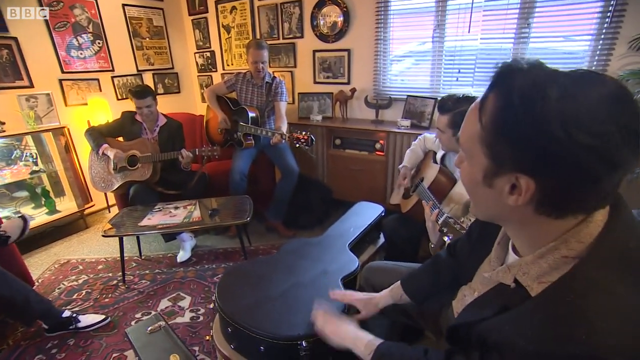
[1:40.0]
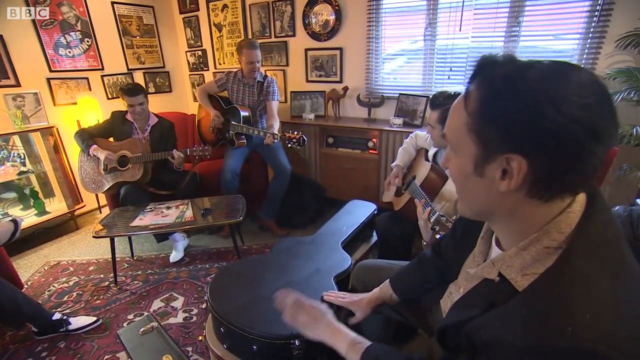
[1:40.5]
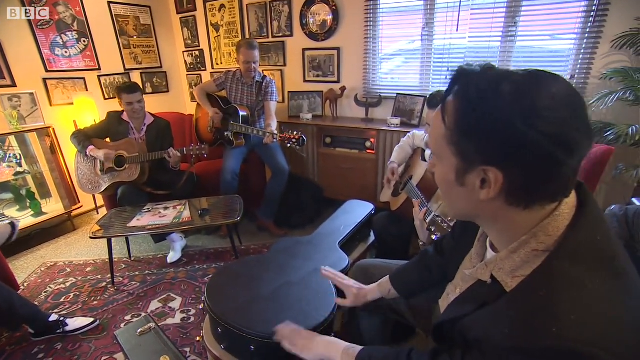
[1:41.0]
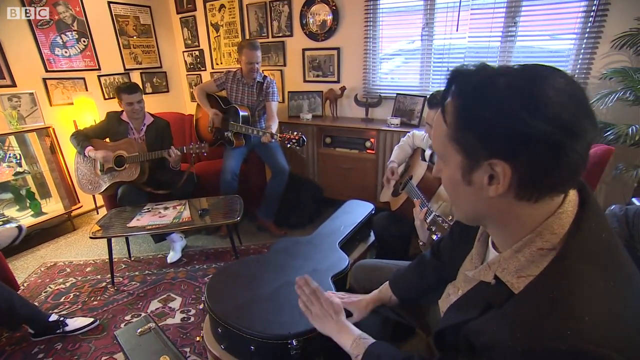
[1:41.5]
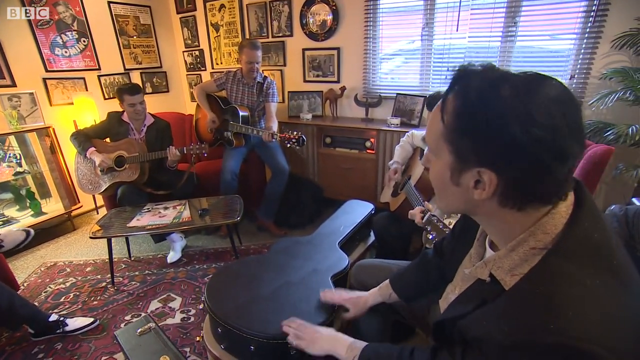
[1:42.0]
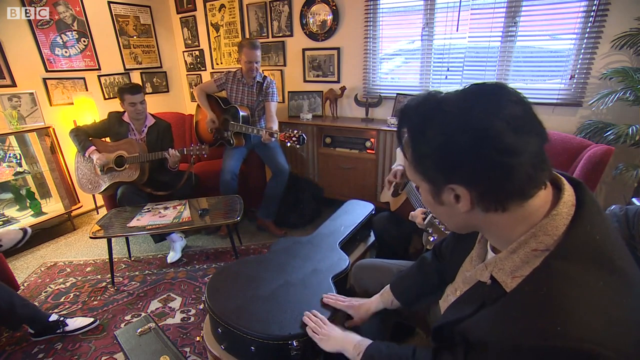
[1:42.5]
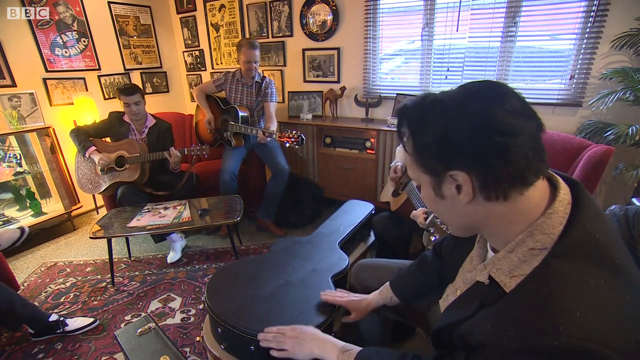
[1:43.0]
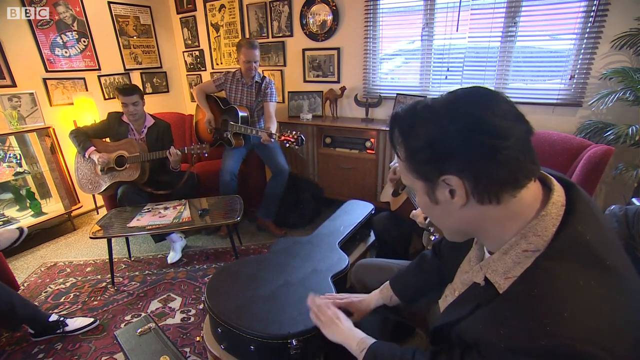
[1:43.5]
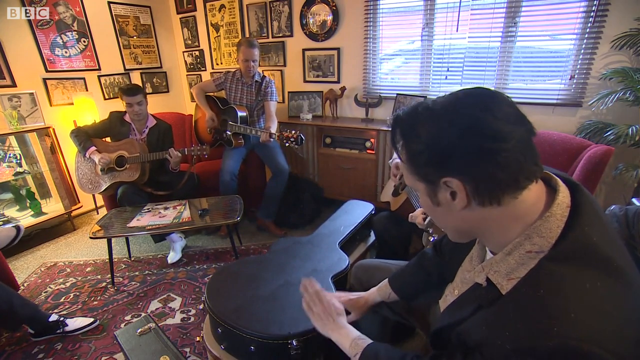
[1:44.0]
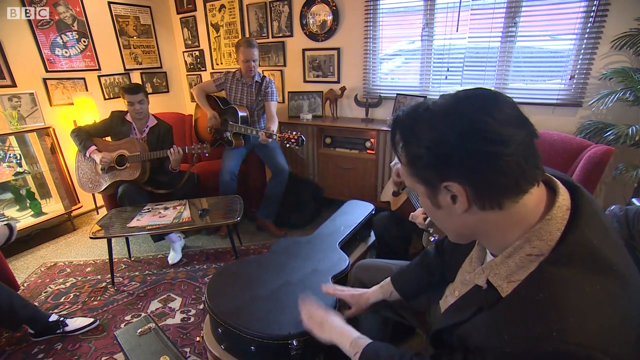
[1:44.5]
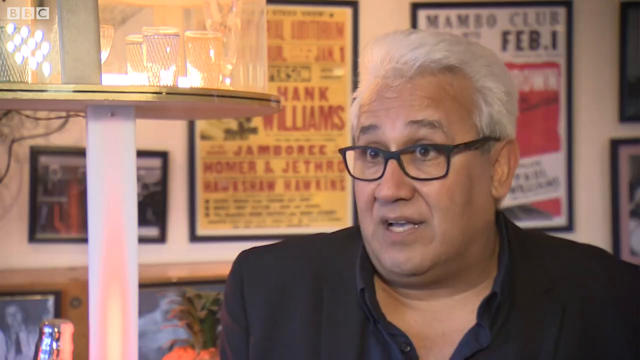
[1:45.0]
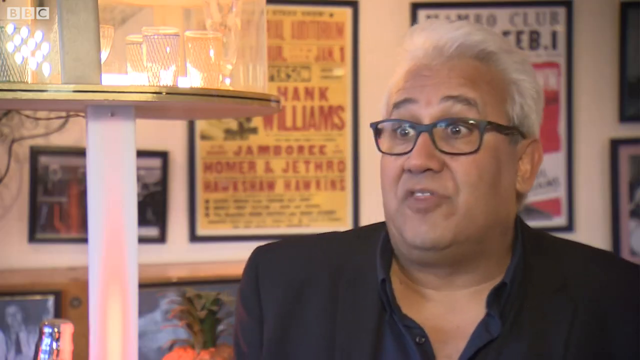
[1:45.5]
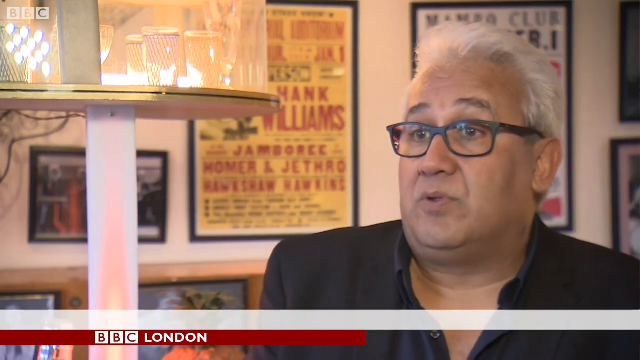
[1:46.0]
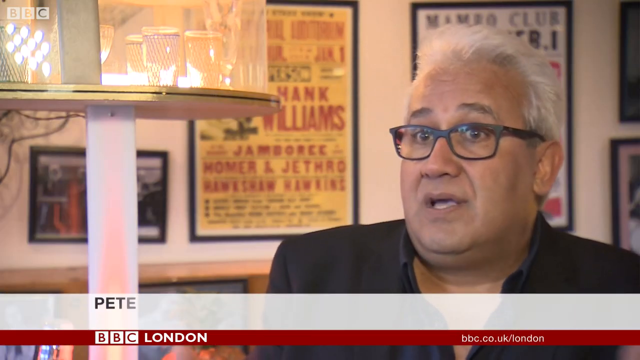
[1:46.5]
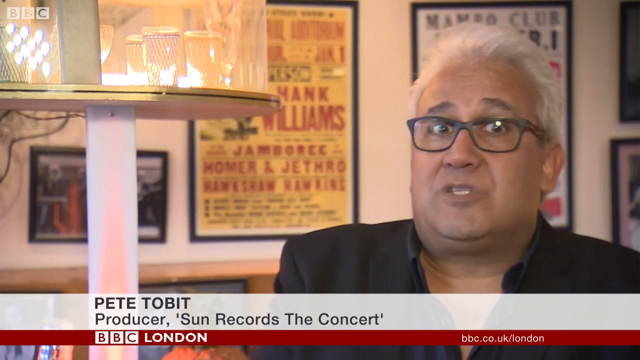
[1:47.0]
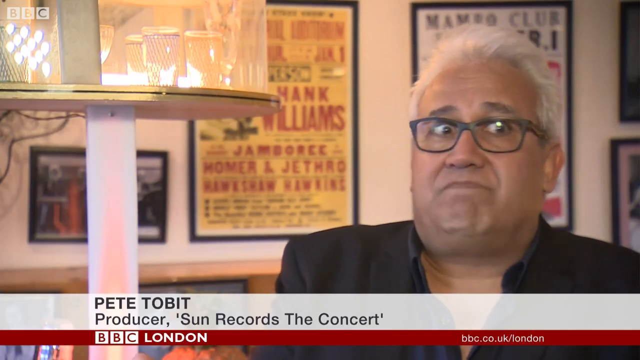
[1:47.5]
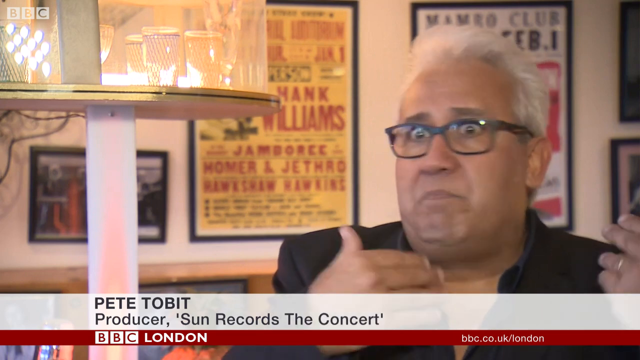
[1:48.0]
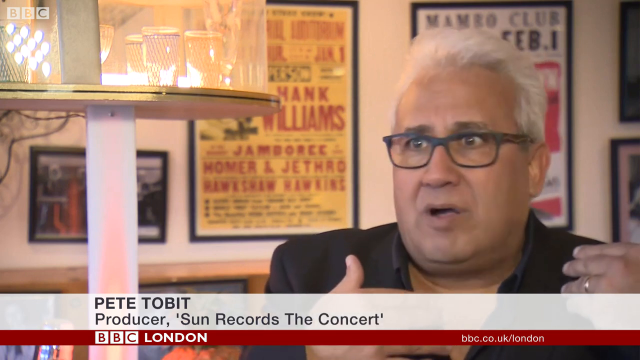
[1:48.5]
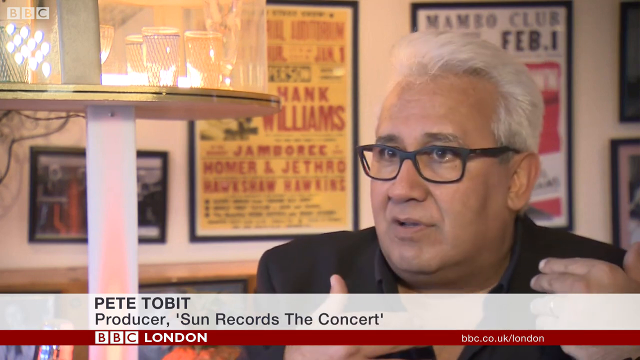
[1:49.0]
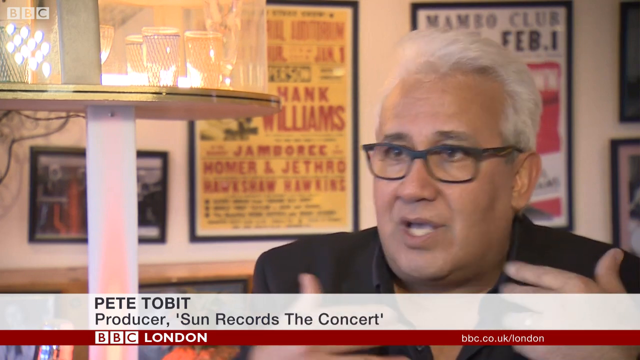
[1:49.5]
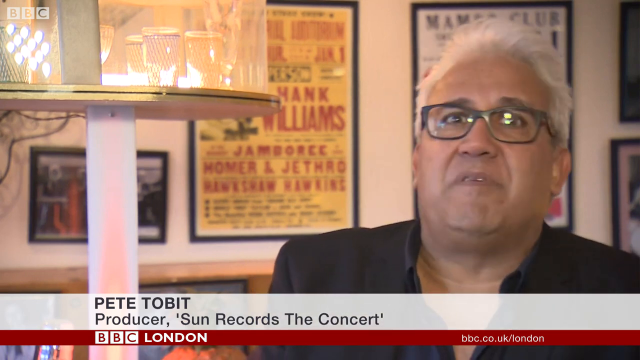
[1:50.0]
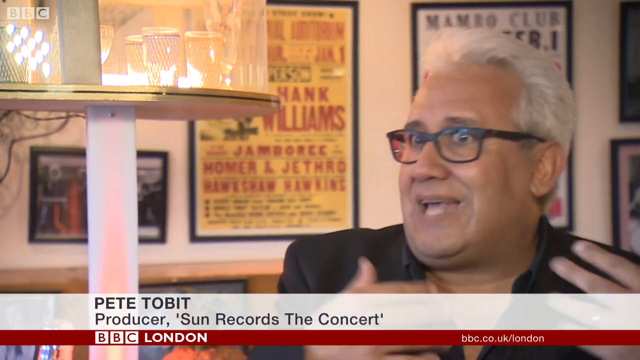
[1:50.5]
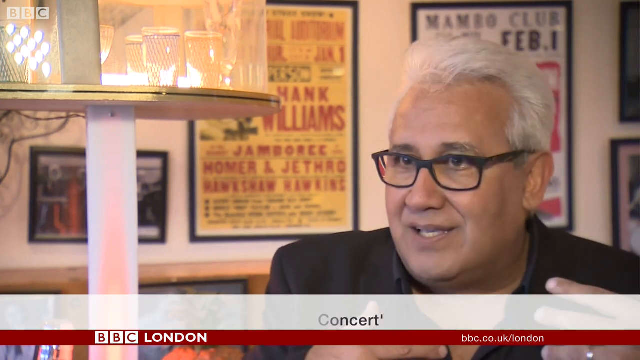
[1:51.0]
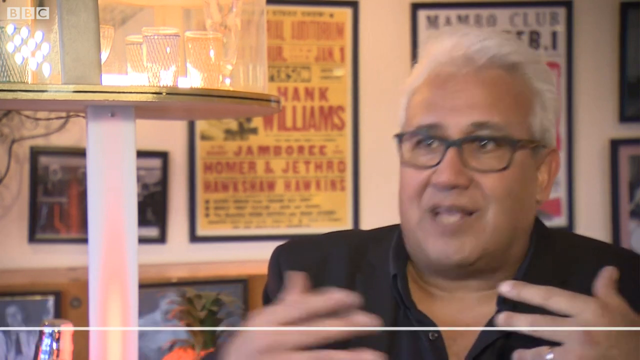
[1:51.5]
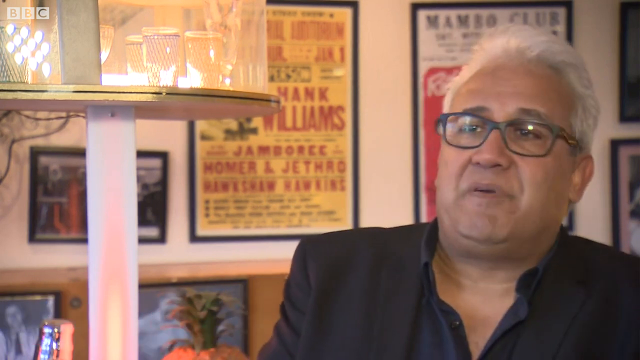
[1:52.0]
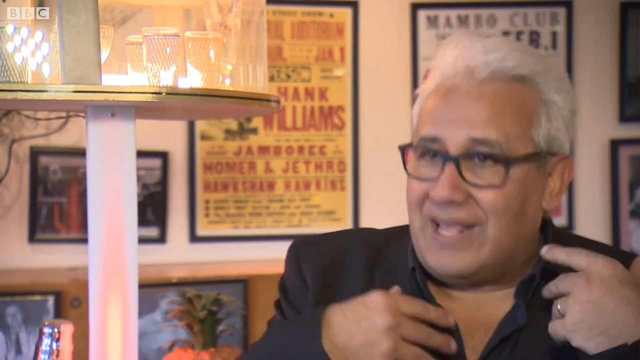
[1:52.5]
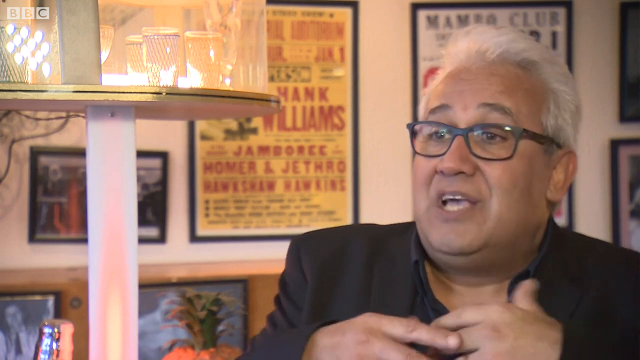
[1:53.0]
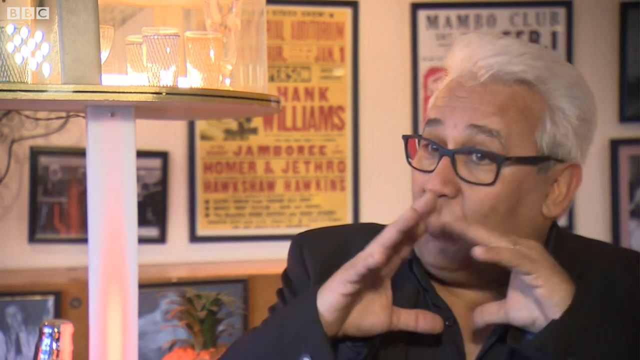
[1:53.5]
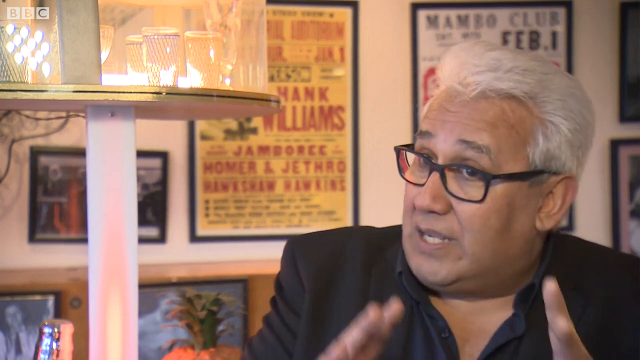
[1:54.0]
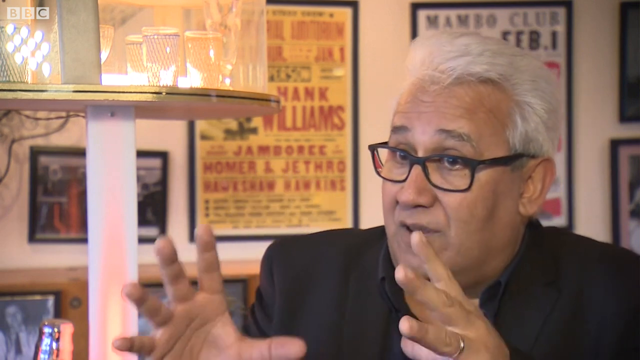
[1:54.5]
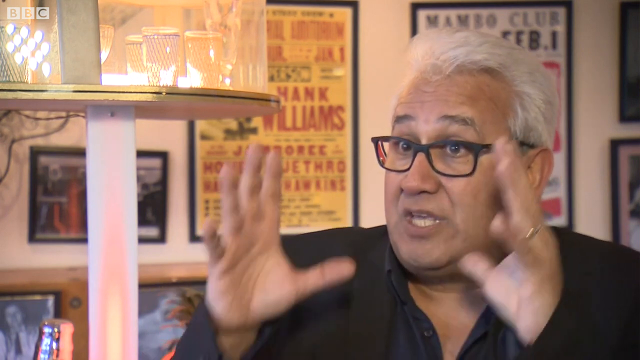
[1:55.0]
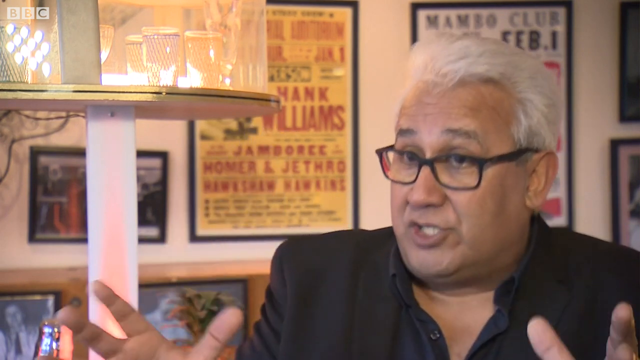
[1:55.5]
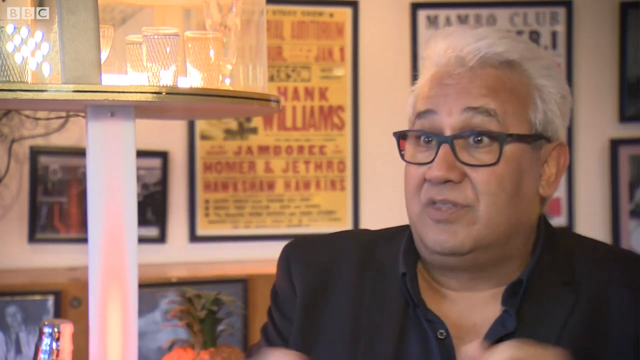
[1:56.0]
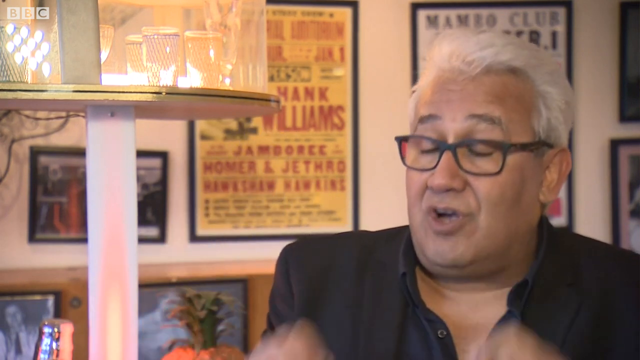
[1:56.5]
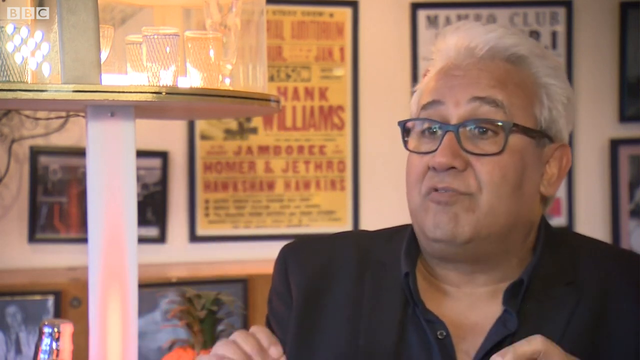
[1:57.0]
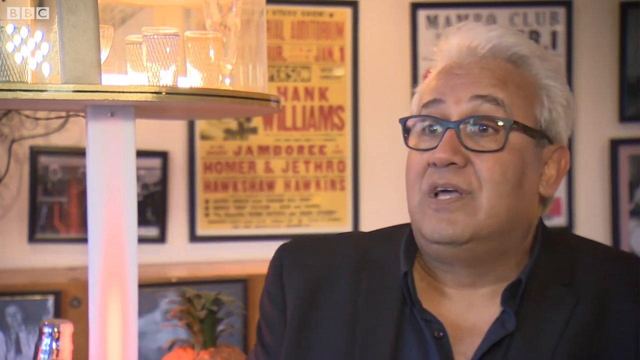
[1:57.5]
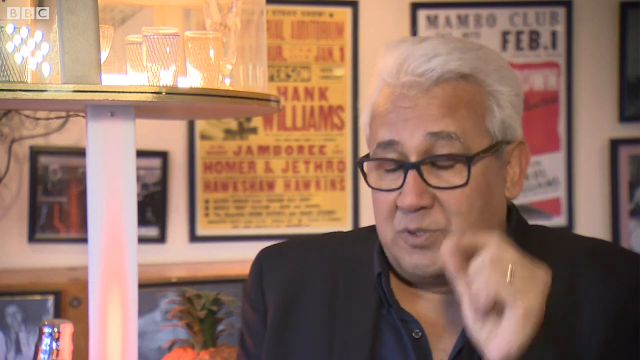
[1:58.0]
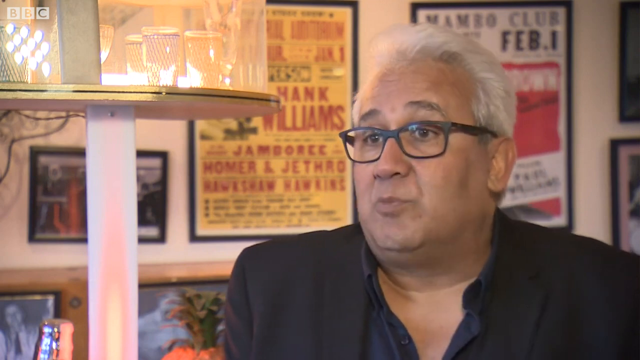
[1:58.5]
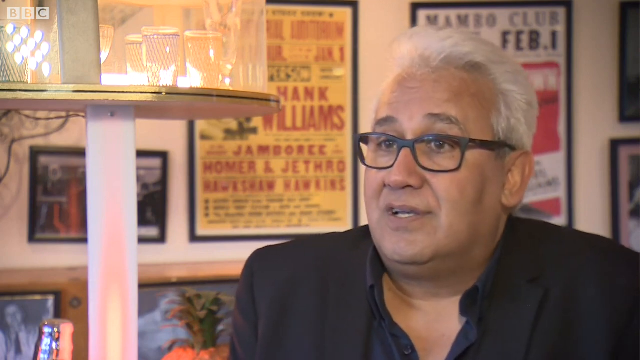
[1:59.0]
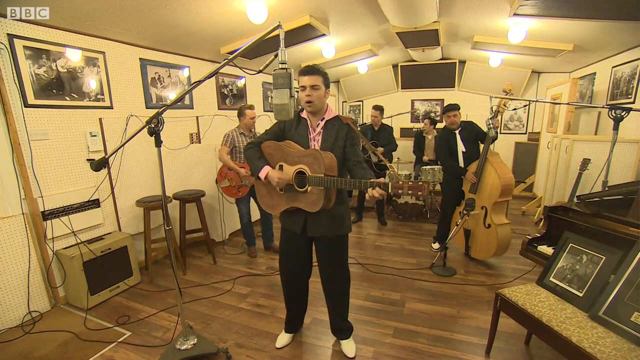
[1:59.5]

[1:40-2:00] A band plays in a music studio. Three people play guitars, their hands moving up and down as they strum. In the far right corner, a man uses both hands to tap on top of a guitar case, making percussion sounds like a drum or bongos, his hands moving independently, one up and one down. The video then shows a man talking directly to the camera, his hands out in front of him and moving around as if to help express his words. Eventually the band is shown playing in the studio, with a singer up front strumming a guitar and the rest of the band in the background playing their instruments, including a drum kit and a stand-up bass.